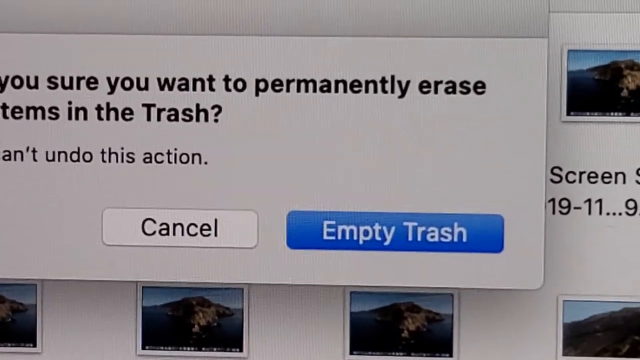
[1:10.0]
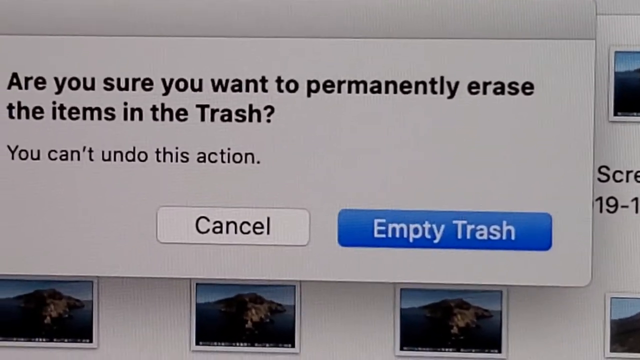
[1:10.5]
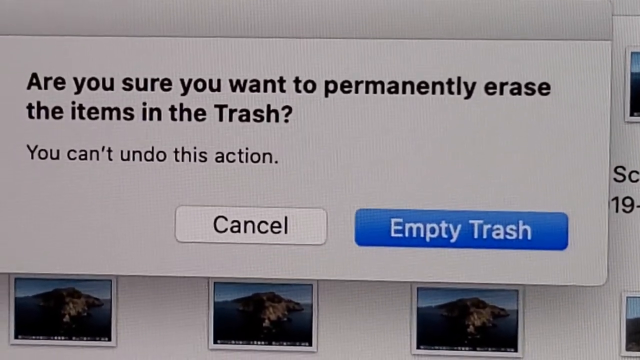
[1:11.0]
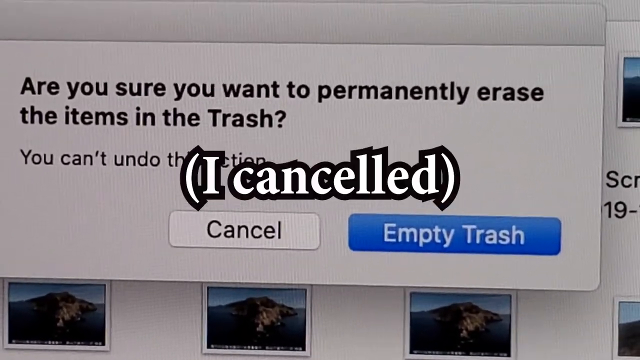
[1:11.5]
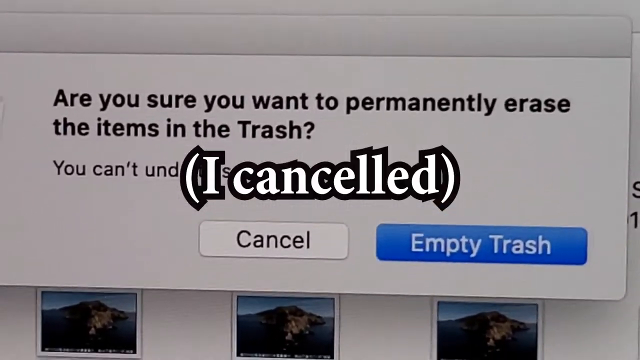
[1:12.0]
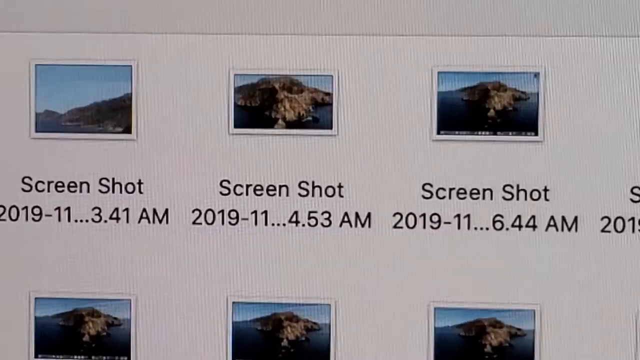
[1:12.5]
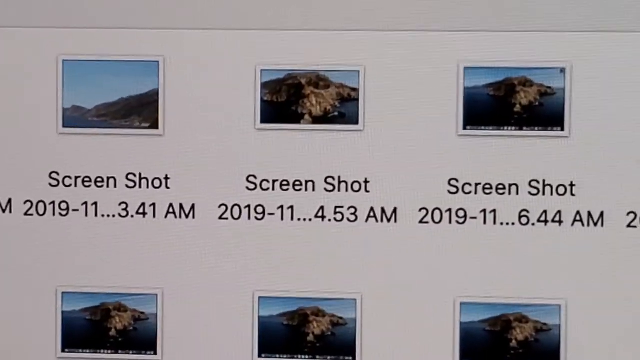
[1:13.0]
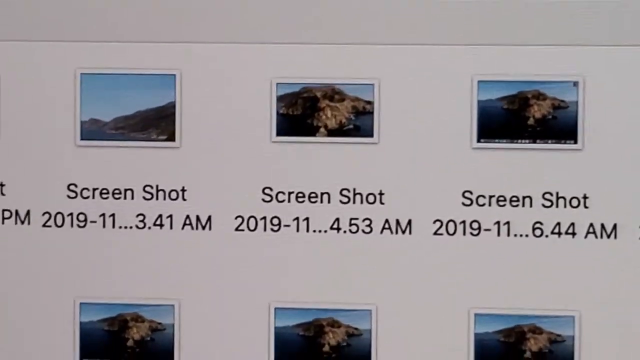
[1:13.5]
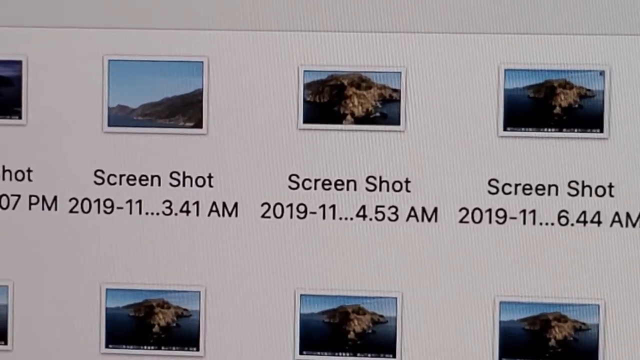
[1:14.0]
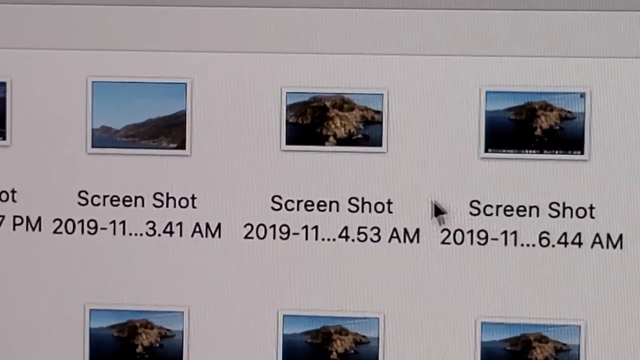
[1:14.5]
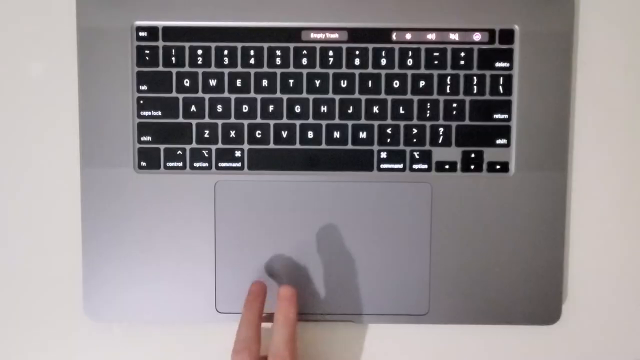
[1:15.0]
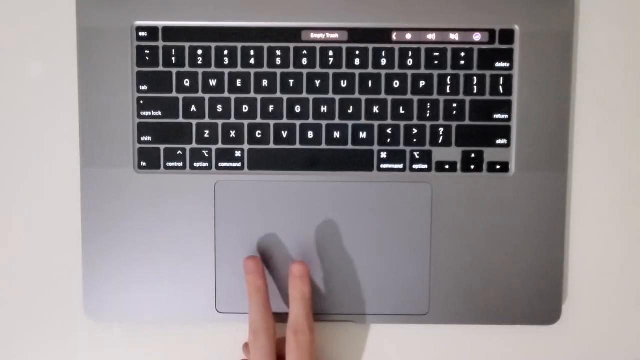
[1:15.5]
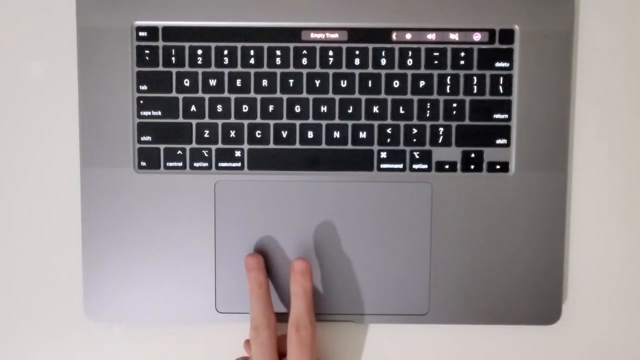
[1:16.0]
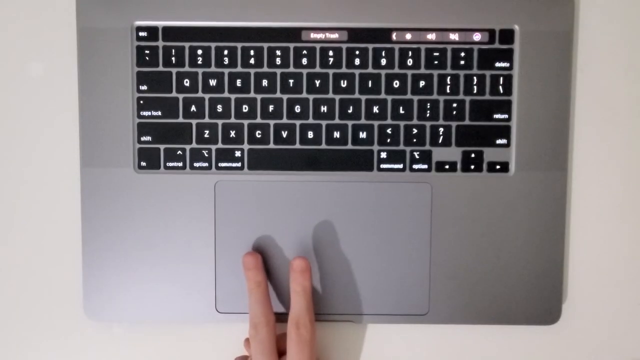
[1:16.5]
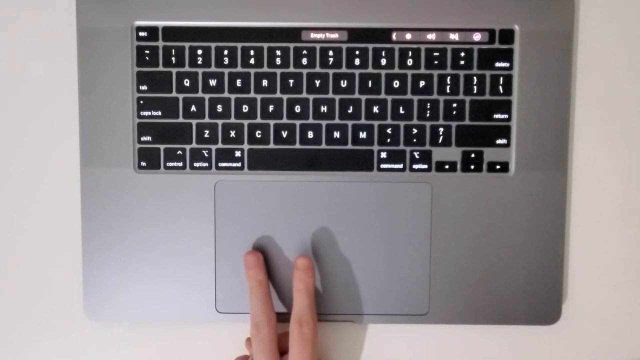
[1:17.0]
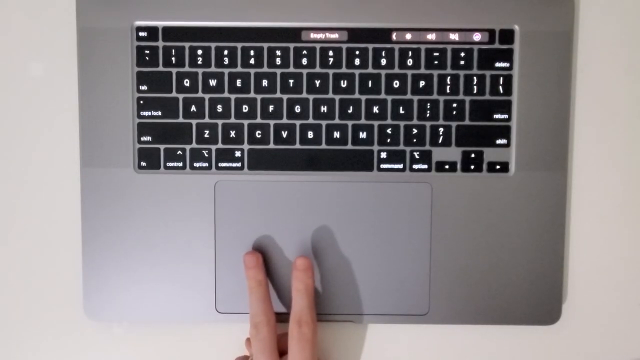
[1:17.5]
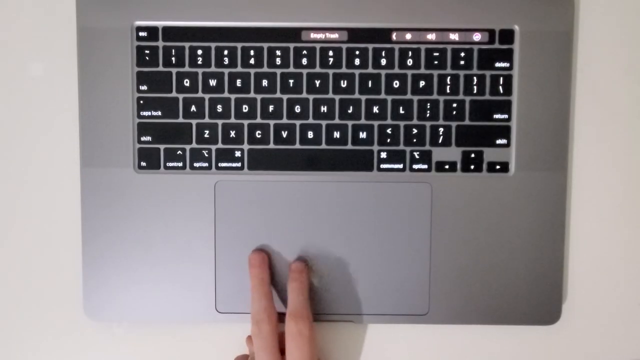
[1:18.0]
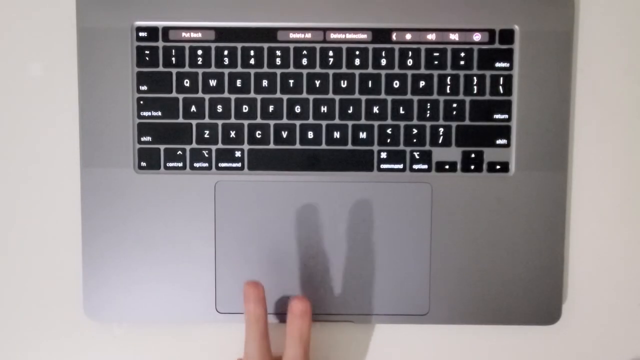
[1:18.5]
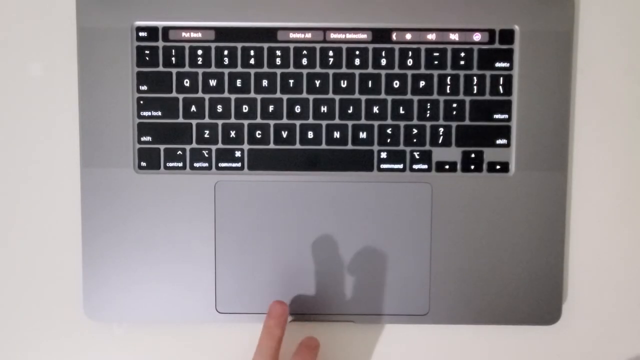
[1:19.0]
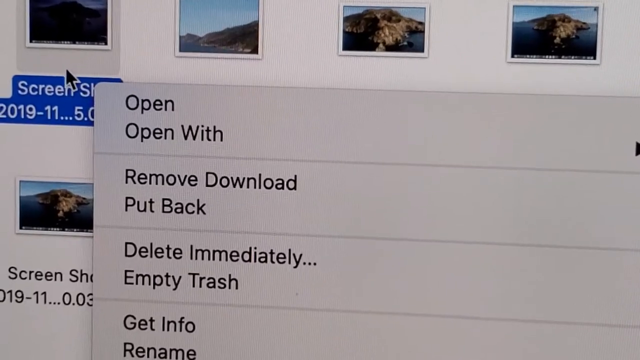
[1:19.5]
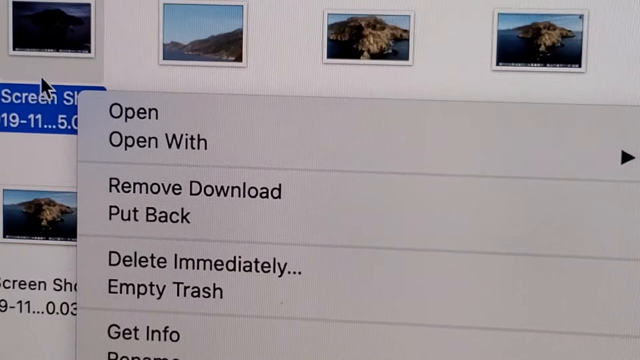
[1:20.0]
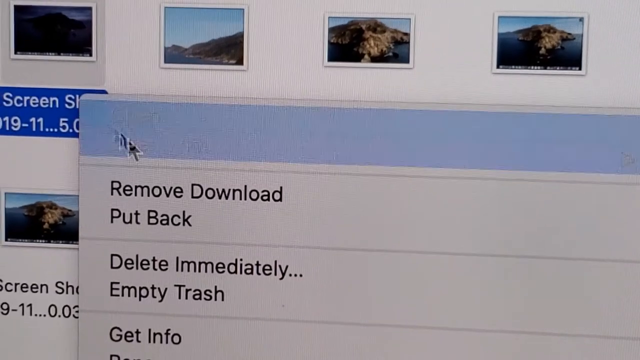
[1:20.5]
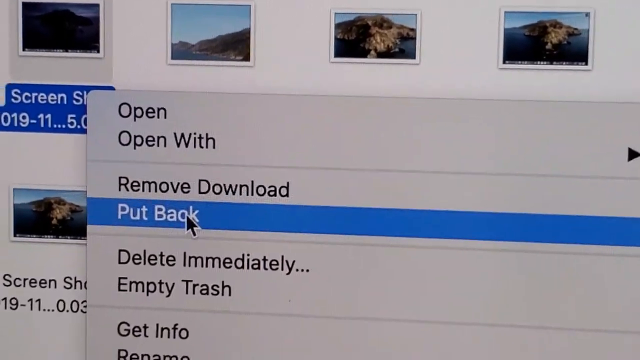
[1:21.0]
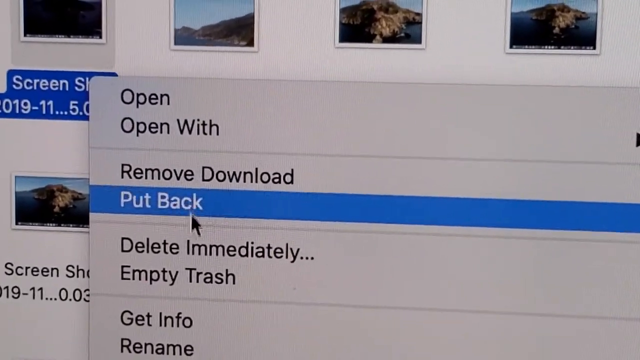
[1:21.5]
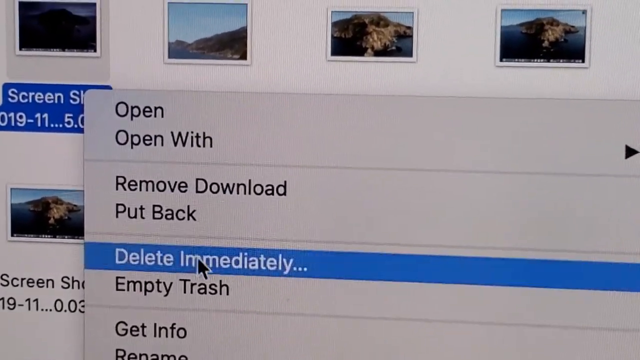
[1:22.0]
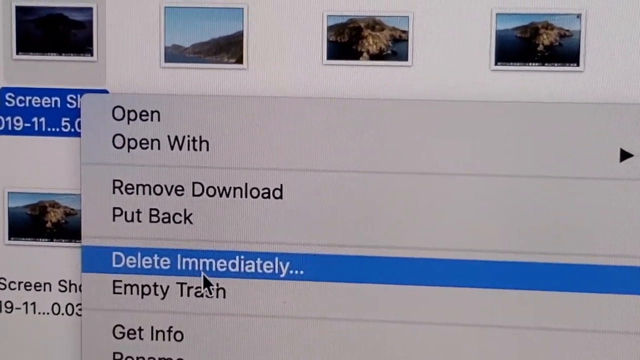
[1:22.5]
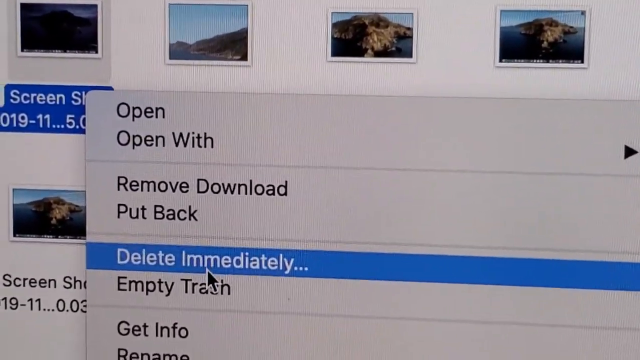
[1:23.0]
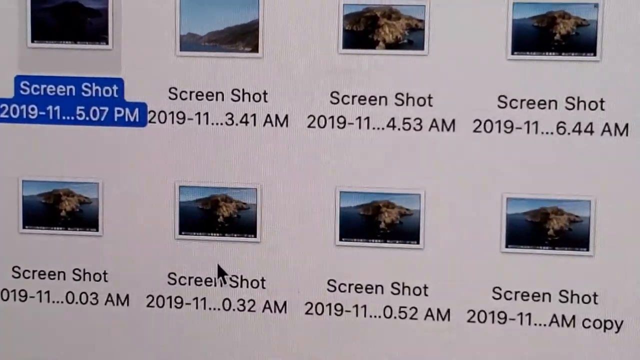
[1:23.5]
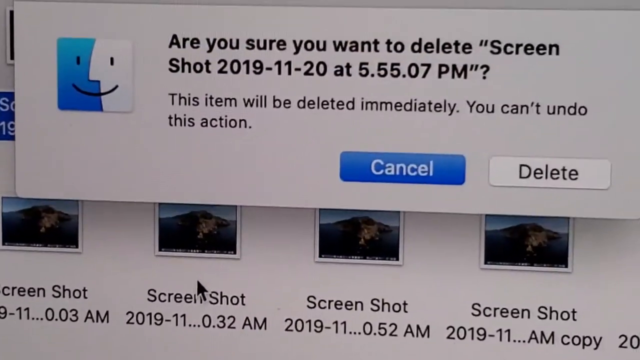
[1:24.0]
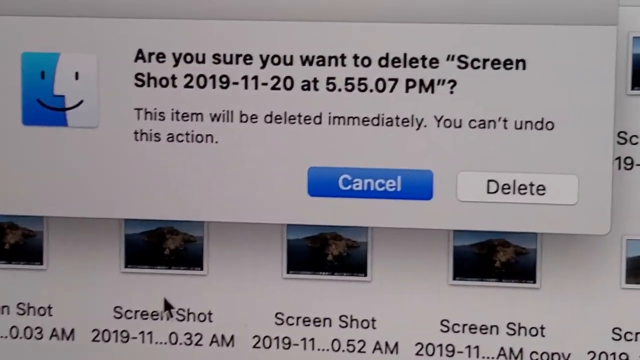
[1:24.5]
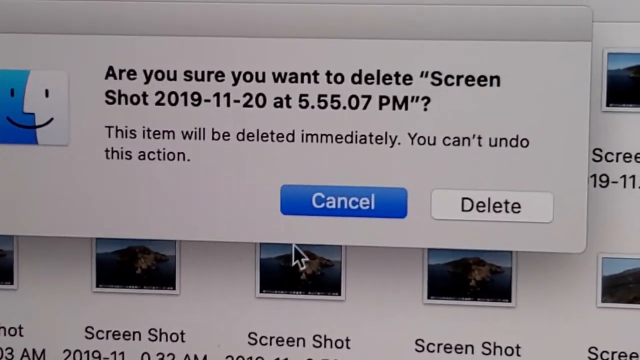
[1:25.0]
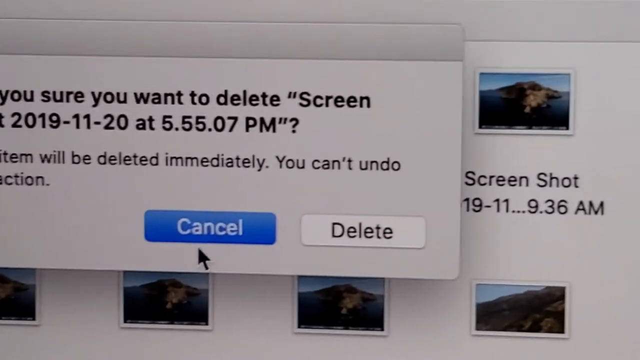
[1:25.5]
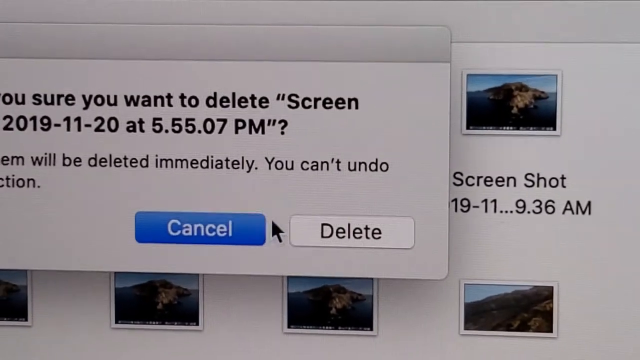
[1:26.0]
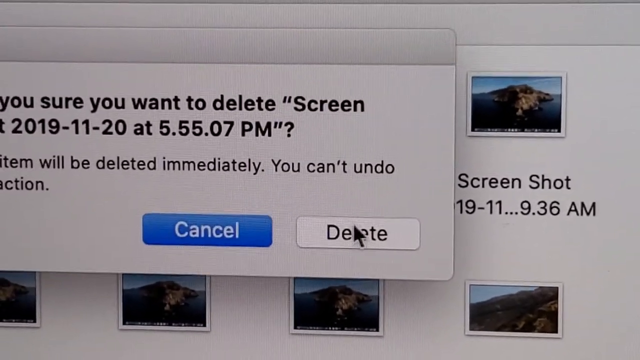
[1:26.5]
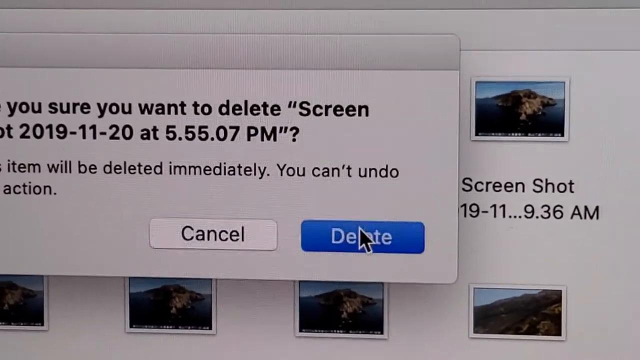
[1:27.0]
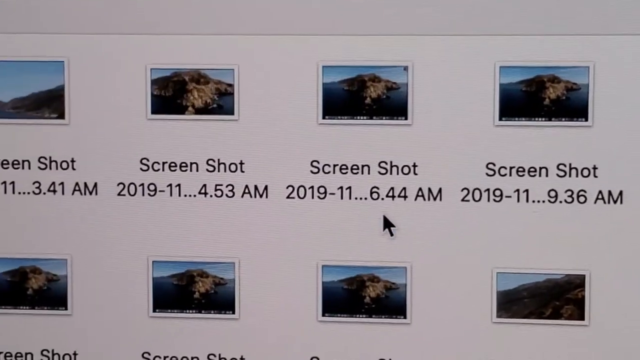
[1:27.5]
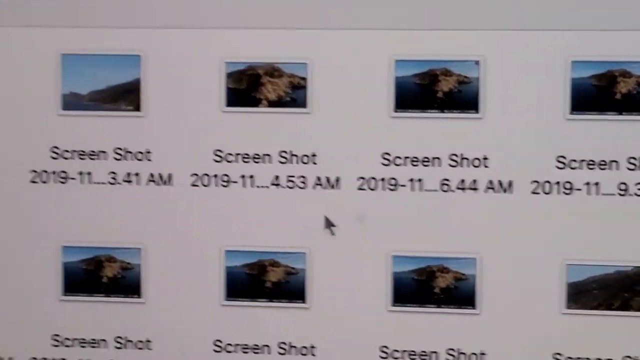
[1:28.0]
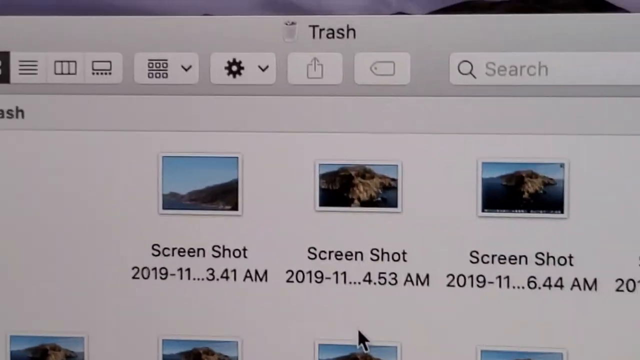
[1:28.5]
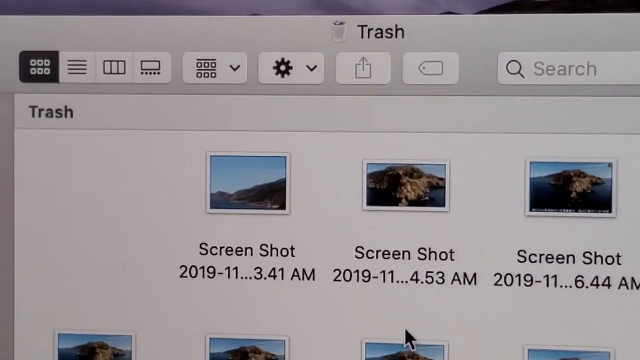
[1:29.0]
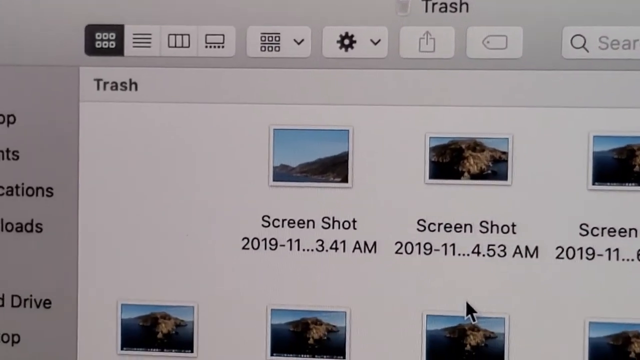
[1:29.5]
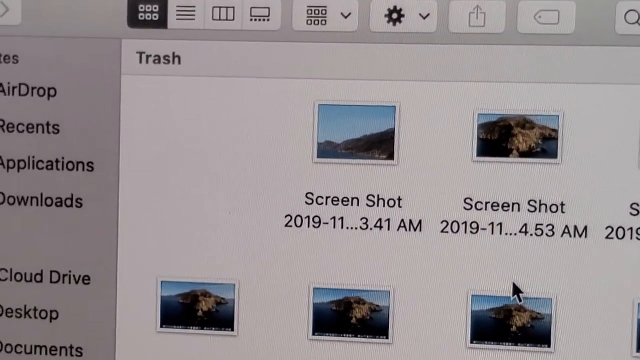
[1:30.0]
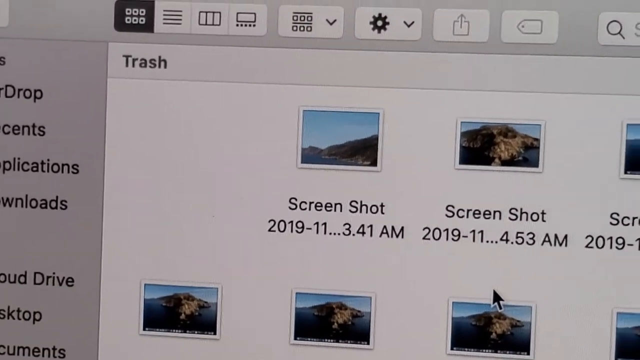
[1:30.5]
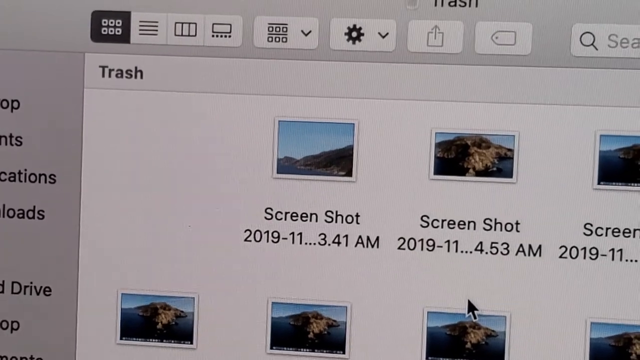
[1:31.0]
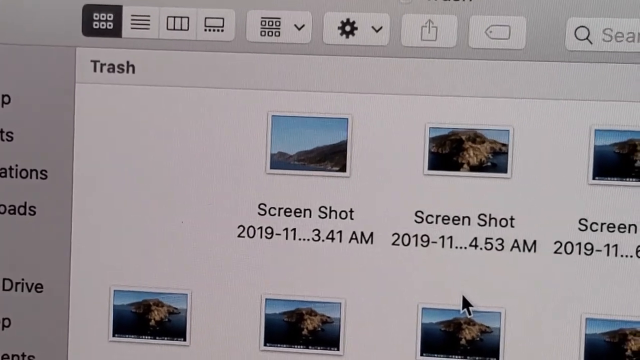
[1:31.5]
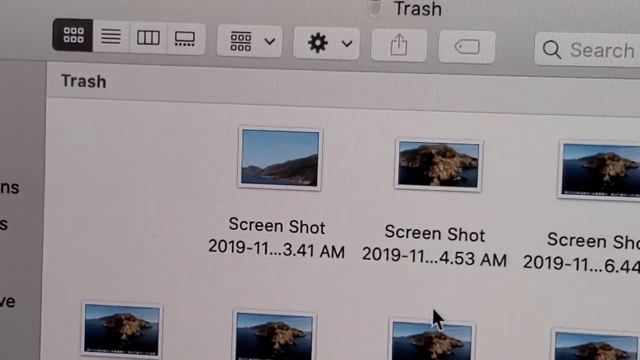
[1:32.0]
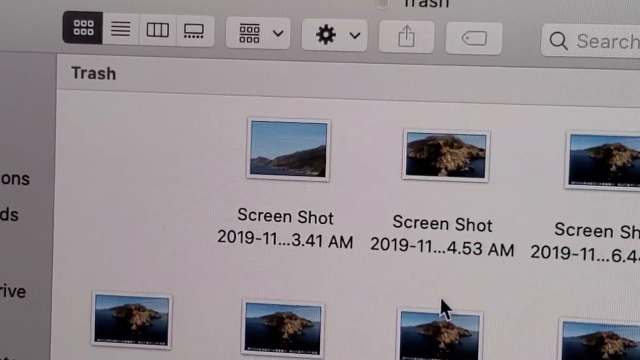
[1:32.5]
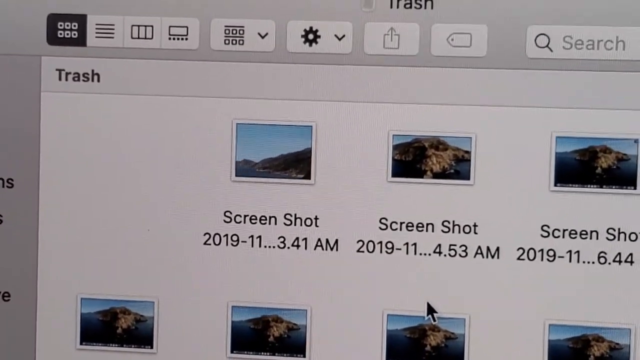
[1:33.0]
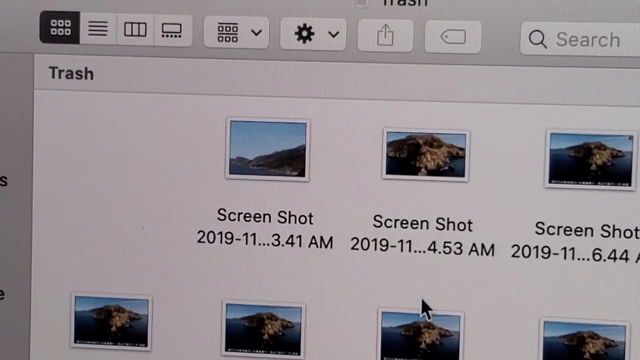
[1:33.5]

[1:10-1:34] The user presses on the trackpad with two fingers, the index and ring fingers, and a menu appears with "open", "open with", "remove", "download", "put back", "empty trash", "get info" and "delete immediately". After "delete immediately" is chosen, a popup appears: "are you sure you want to delete screenshot 2019-11-20 at 5.55.07 pm" and "this item will be deleted immediately. You can't undo this action", with cancel and delete options. The user selects delete. The video apparently shows ways to delete files: dragging to the trash, using the empty trash button, or using a two-finger press on a selected file.